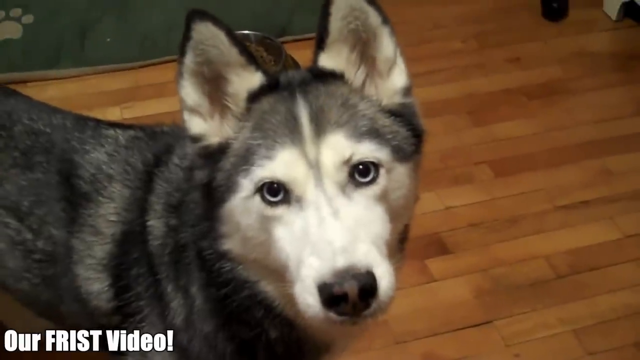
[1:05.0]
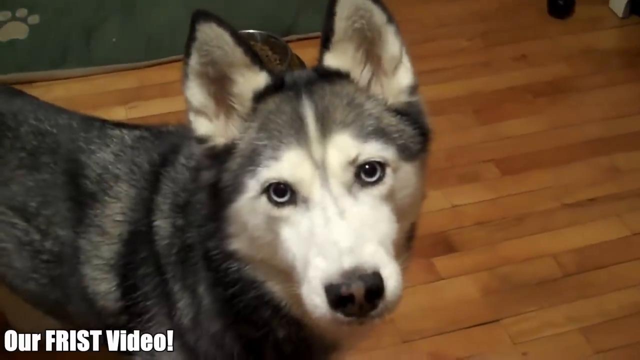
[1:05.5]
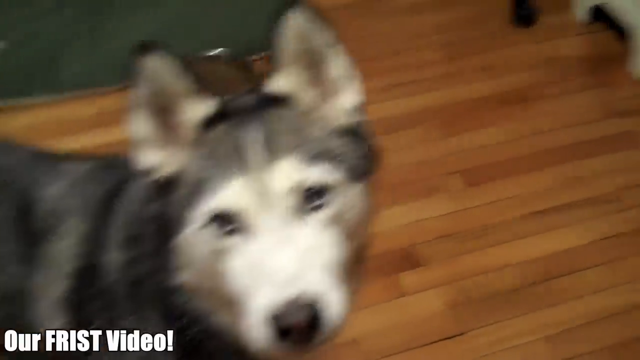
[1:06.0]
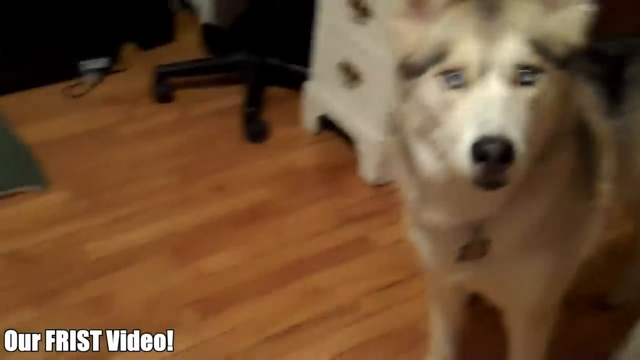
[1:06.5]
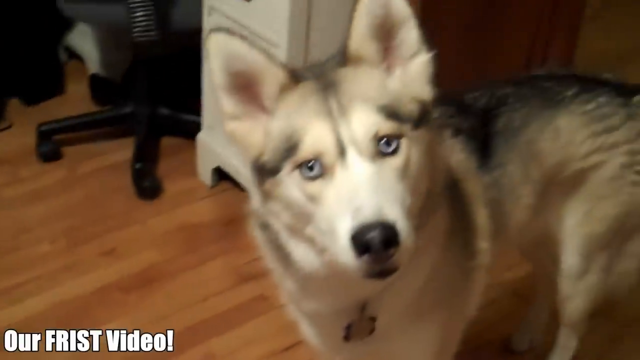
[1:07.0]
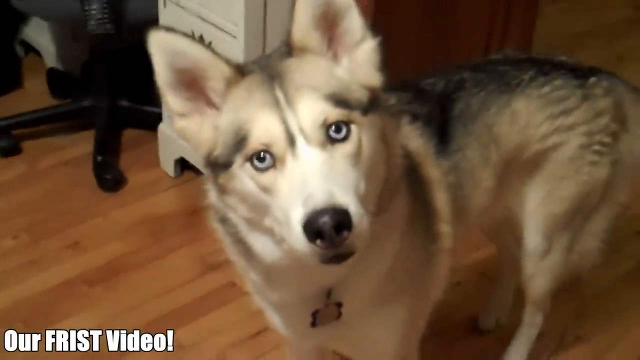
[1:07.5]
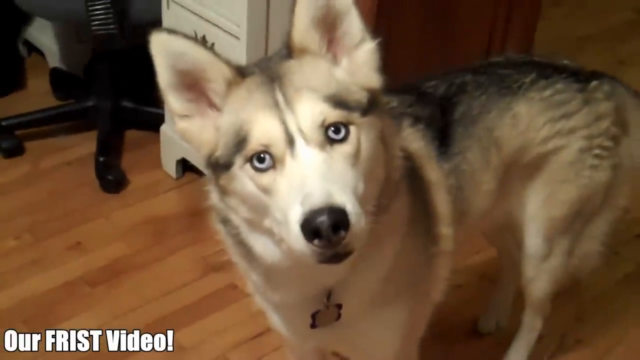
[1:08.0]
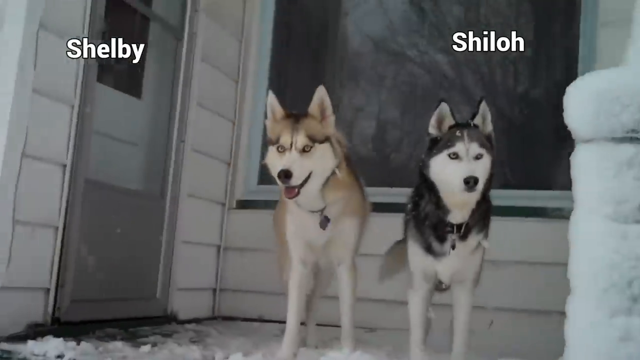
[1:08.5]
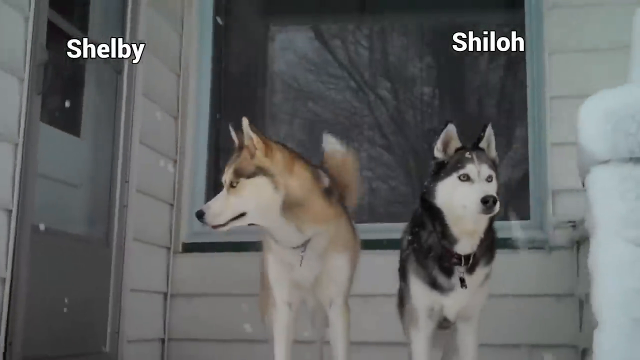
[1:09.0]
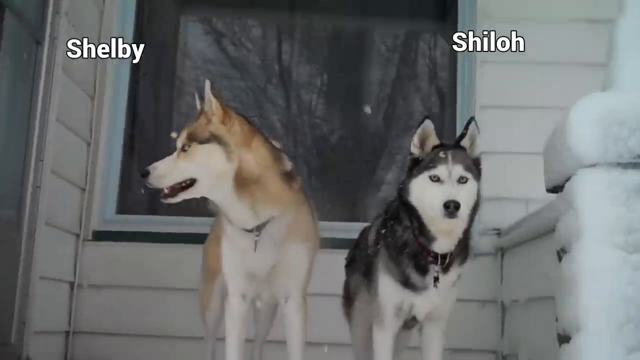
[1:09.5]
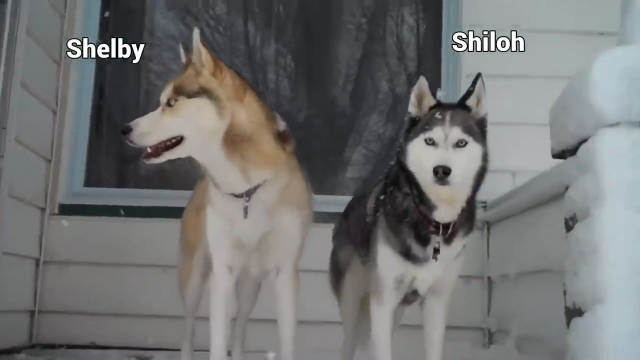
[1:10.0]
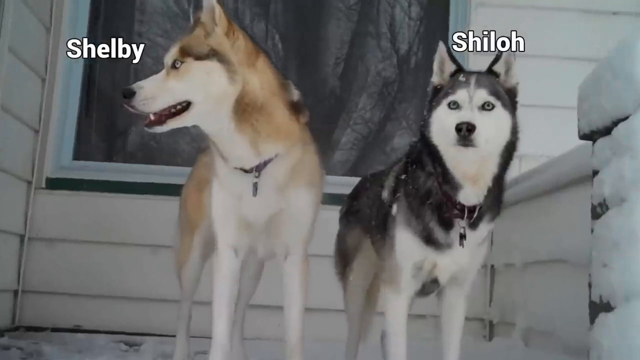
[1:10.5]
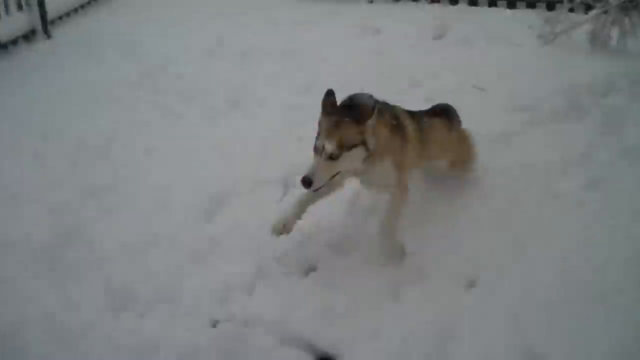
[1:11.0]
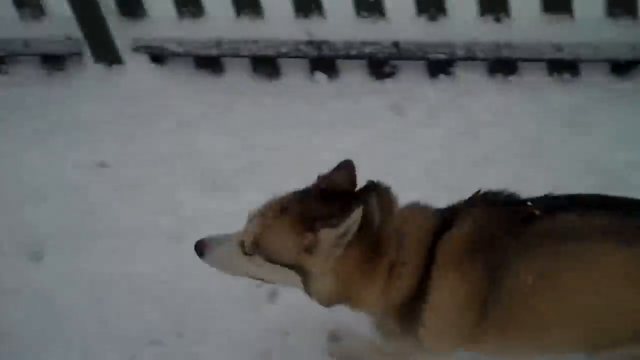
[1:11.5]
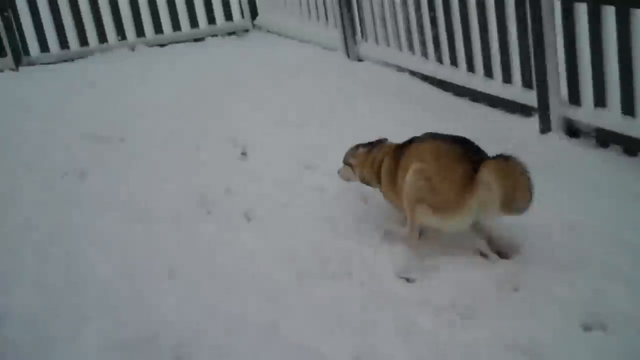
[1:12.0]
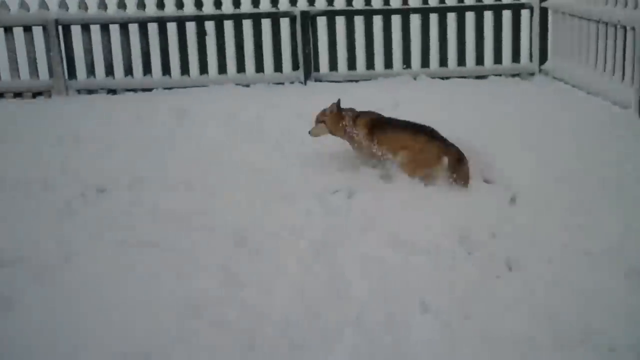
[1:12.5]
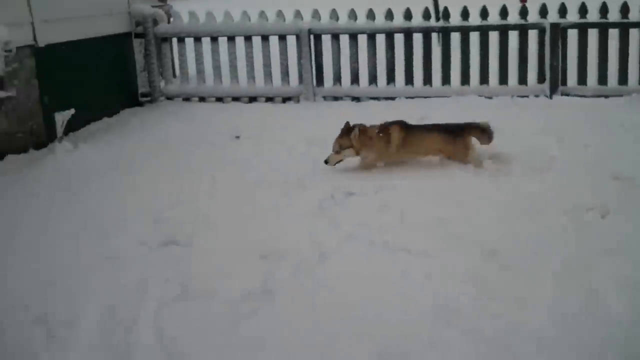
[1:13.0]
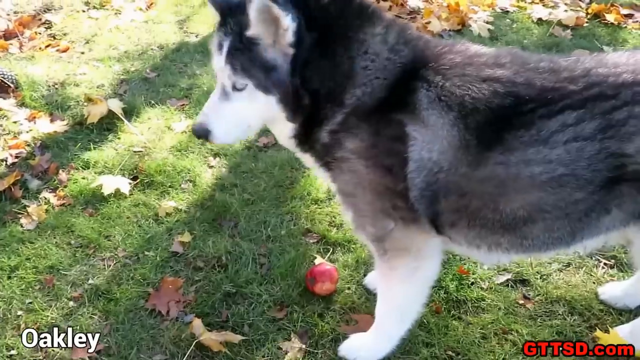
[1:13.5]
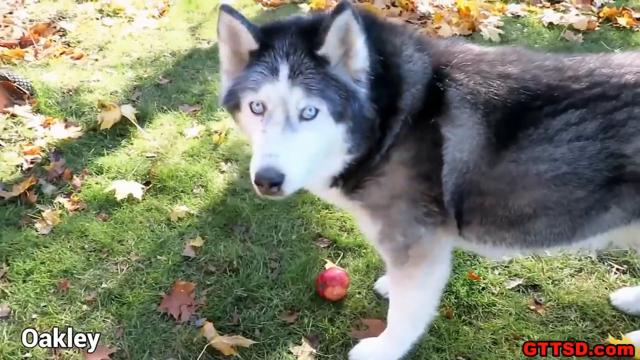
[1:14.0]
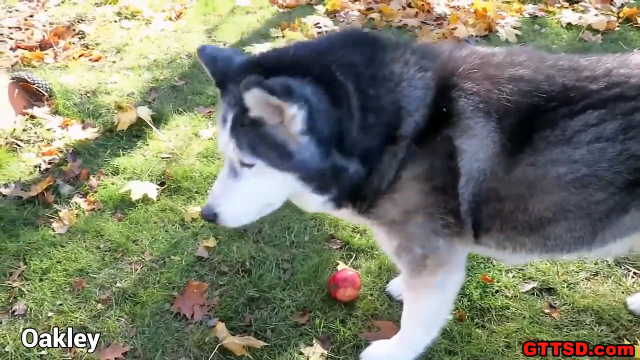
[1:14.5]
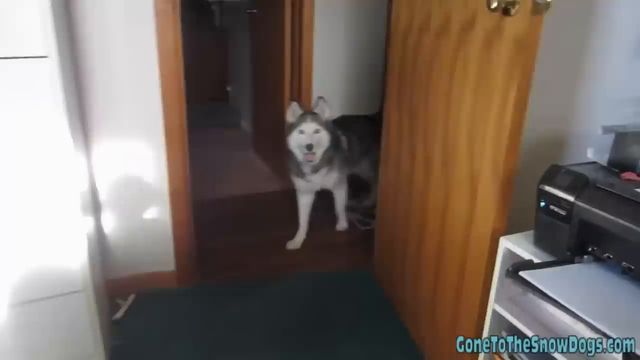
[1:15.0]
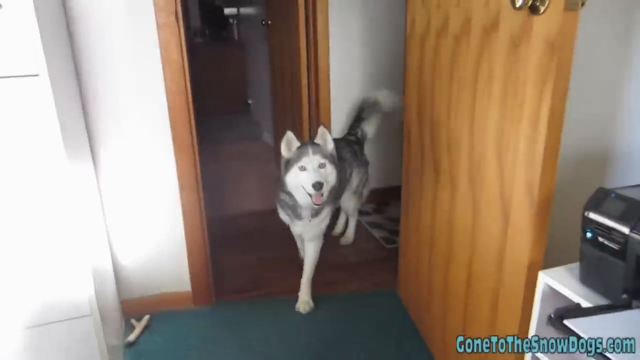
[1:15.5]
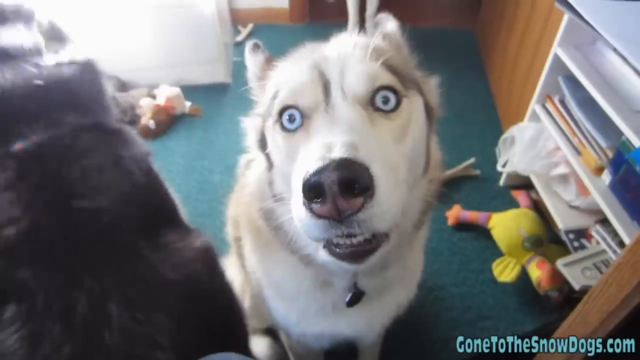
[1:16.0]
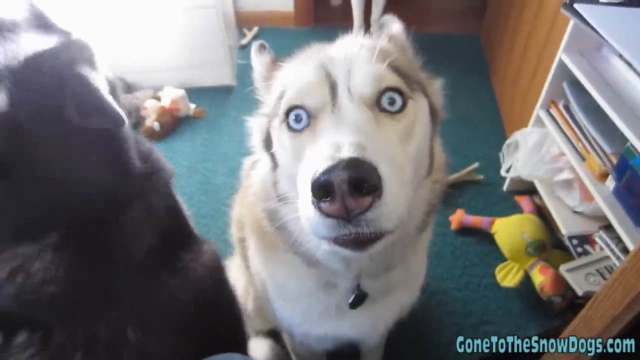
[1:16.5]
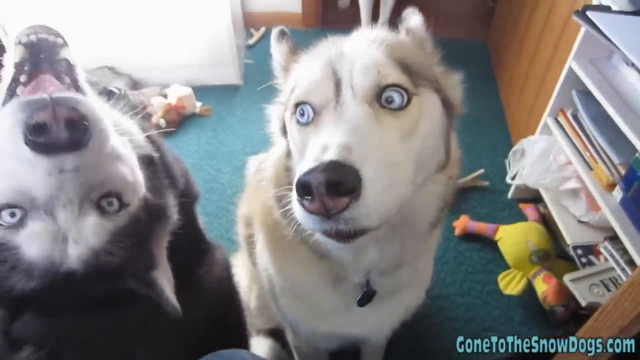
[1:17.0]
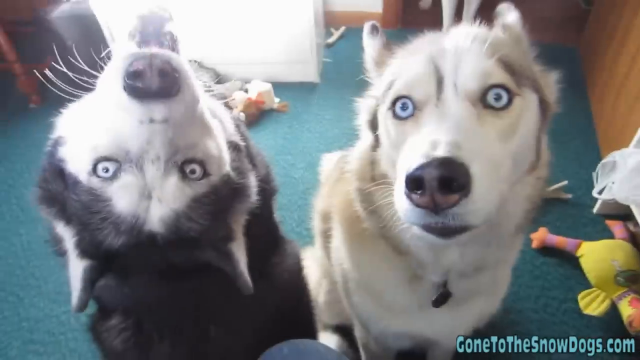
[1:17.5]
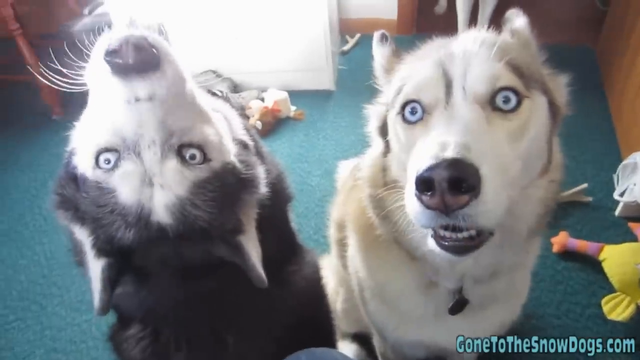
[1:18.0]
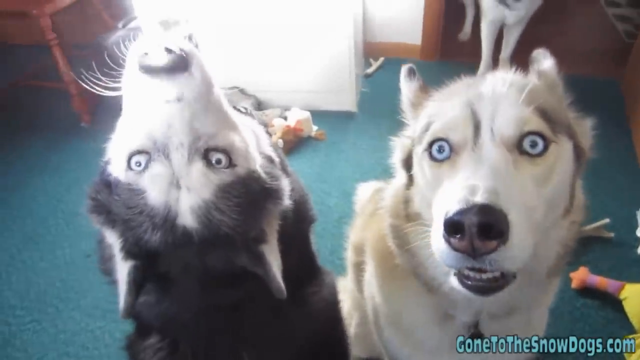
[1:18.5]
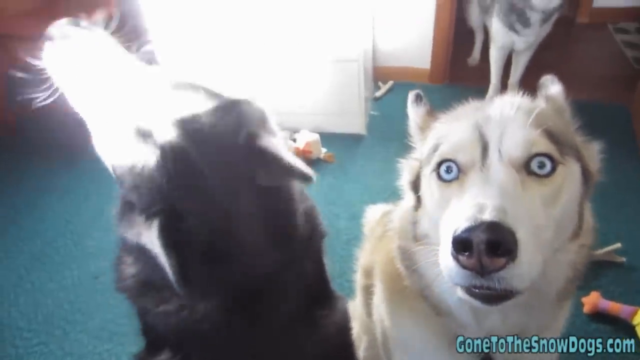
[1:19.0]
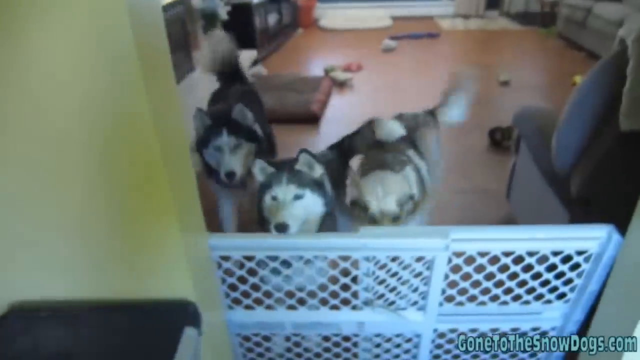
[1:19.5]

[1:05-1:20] Several dogs are shown from different angles and views, some in snowy settings and some indoors, interacting with each other and staring at the camera. At one point a dog sprints through the snow. In another shot one dog sits staring at the camera while the other begins with its back to the camera, looking away, and then turns its head to look at the camera. A sunny, grassy scene shows a dog with the name "Oakley" on the screen, and another shows the two dogs sitting on a front porch with their names in subtitles: one is named "Shiloh," and another dog is named "Shelby."